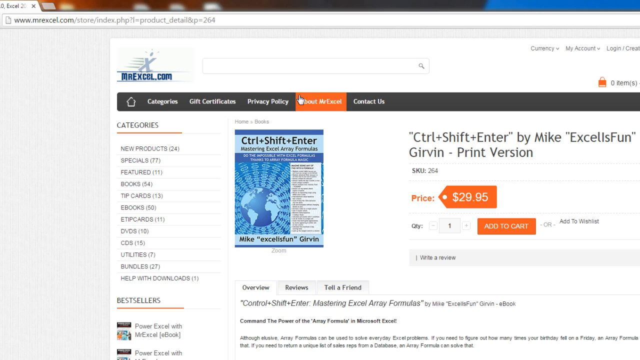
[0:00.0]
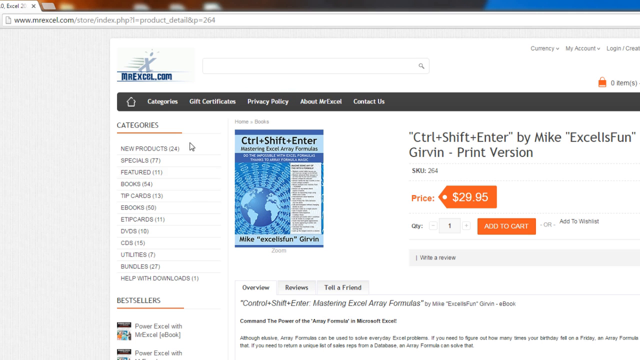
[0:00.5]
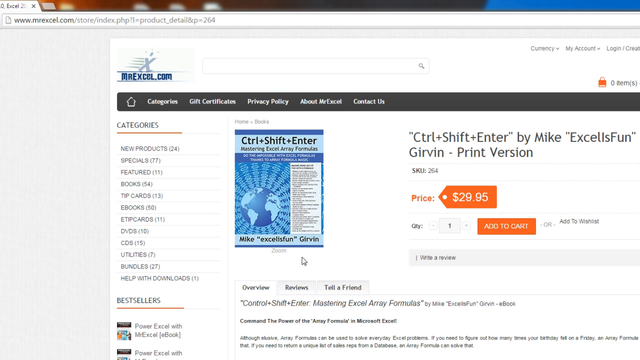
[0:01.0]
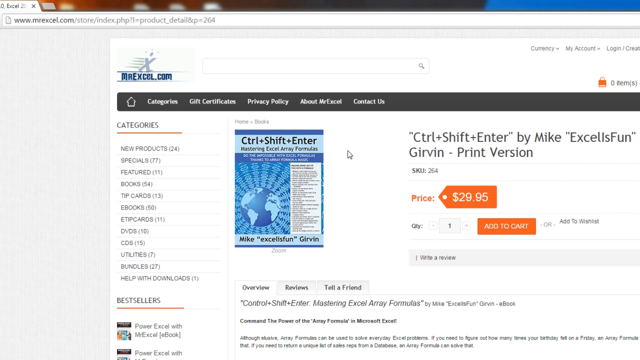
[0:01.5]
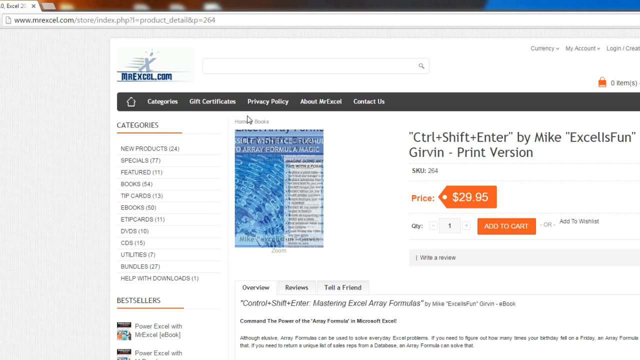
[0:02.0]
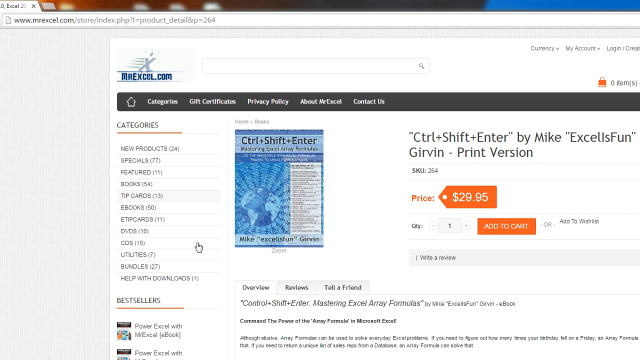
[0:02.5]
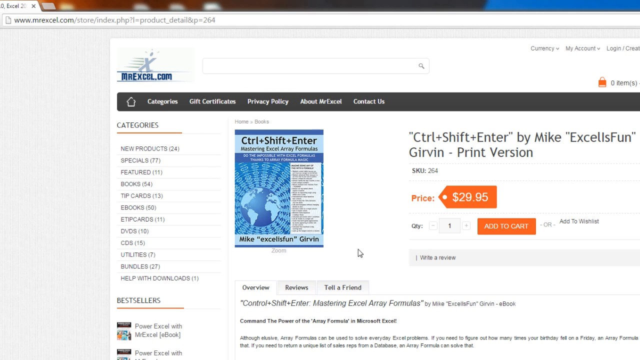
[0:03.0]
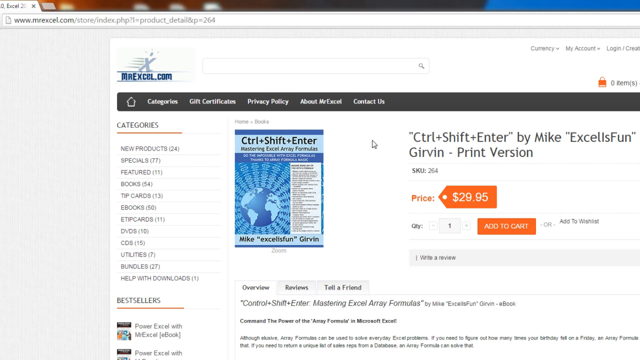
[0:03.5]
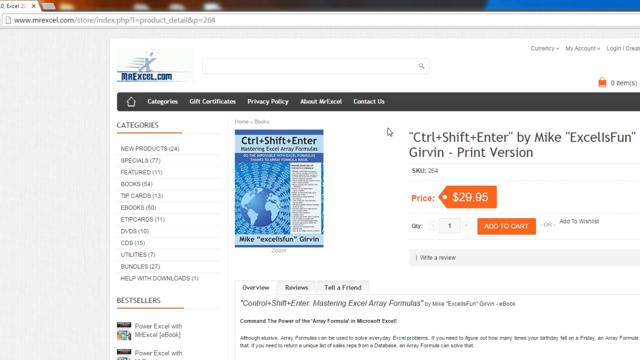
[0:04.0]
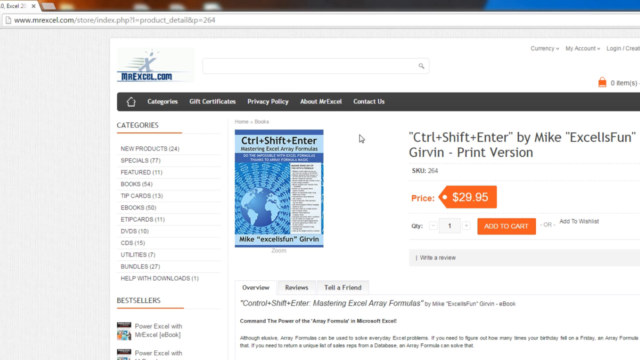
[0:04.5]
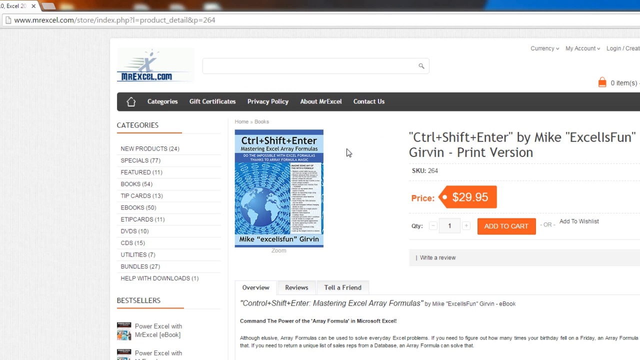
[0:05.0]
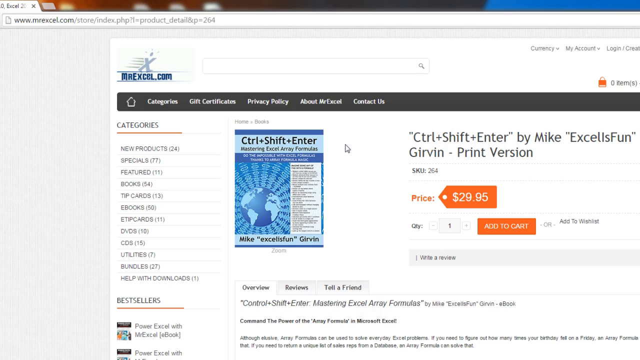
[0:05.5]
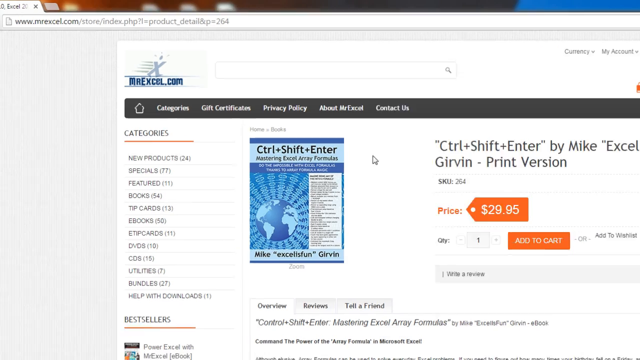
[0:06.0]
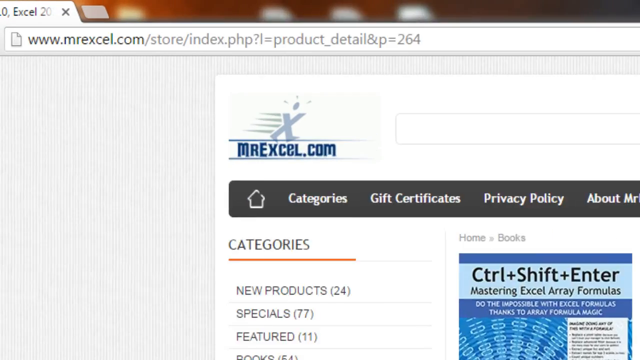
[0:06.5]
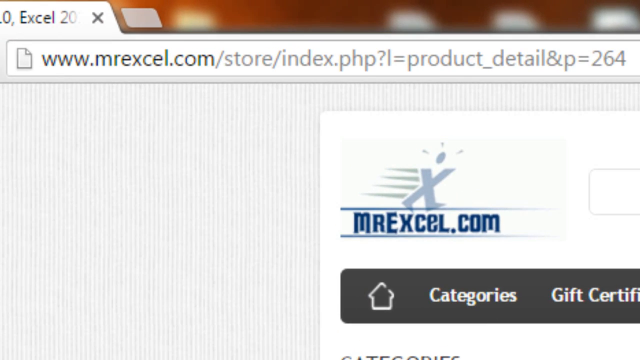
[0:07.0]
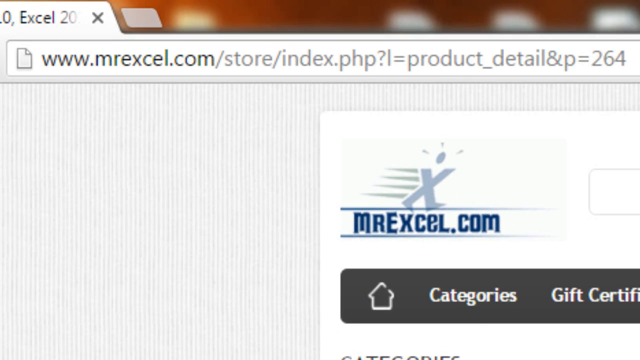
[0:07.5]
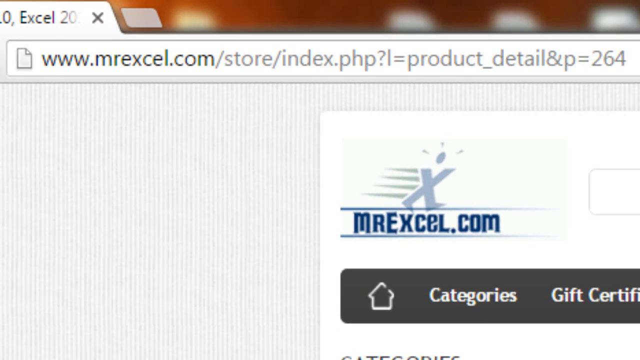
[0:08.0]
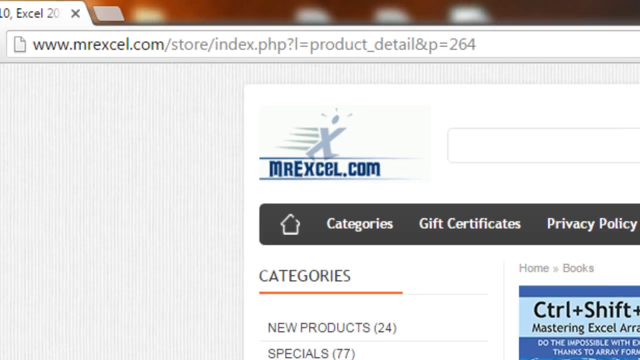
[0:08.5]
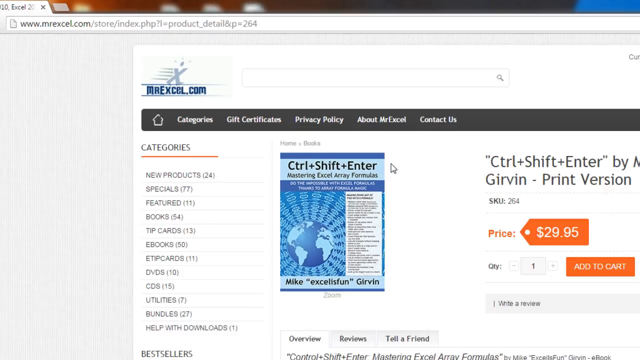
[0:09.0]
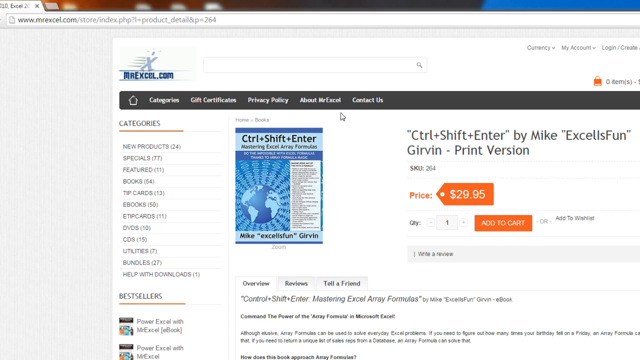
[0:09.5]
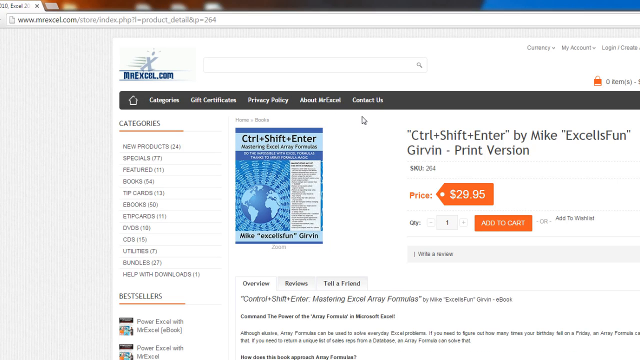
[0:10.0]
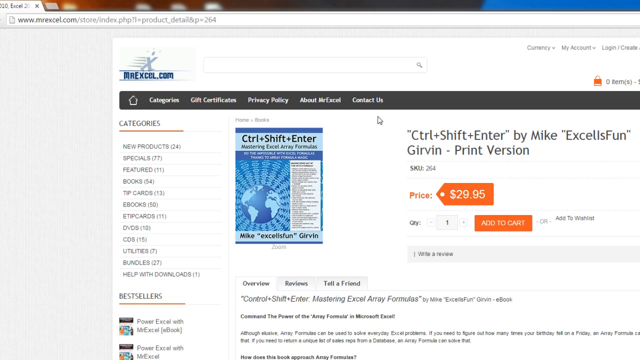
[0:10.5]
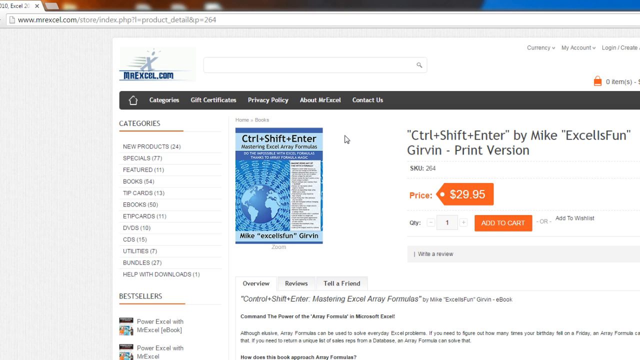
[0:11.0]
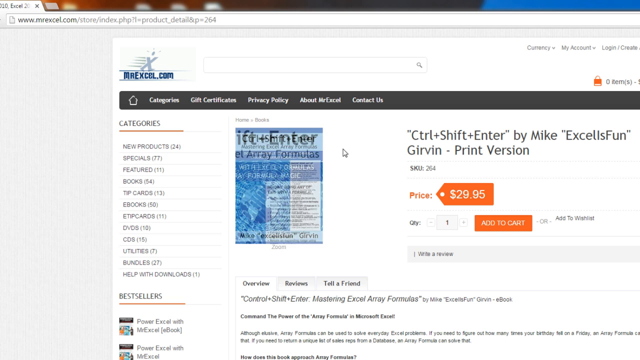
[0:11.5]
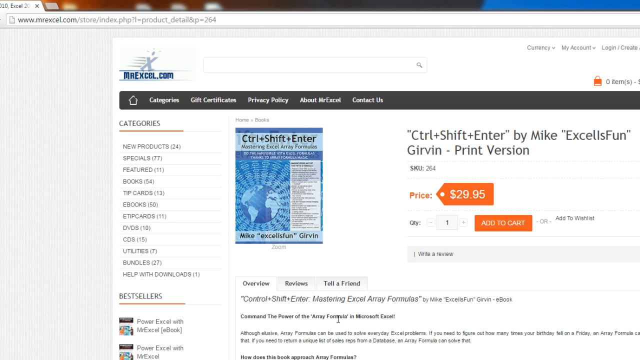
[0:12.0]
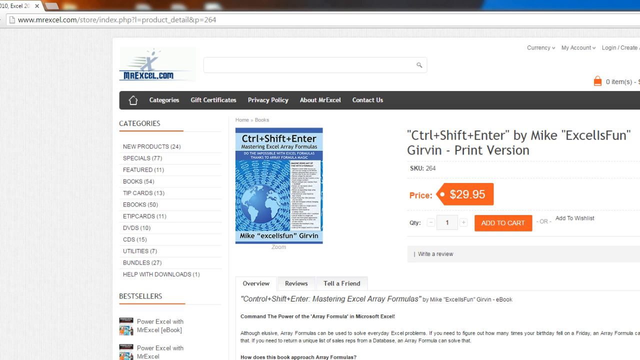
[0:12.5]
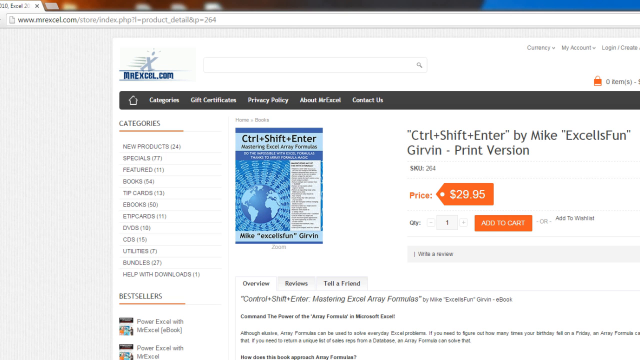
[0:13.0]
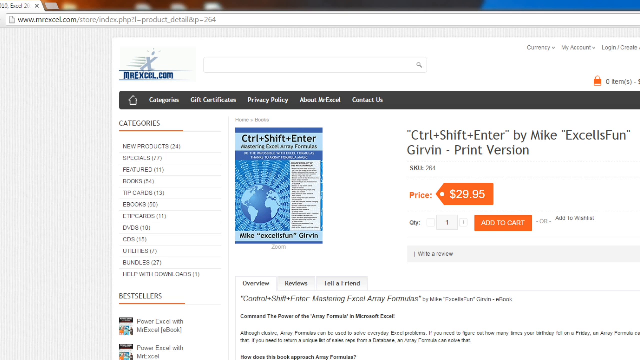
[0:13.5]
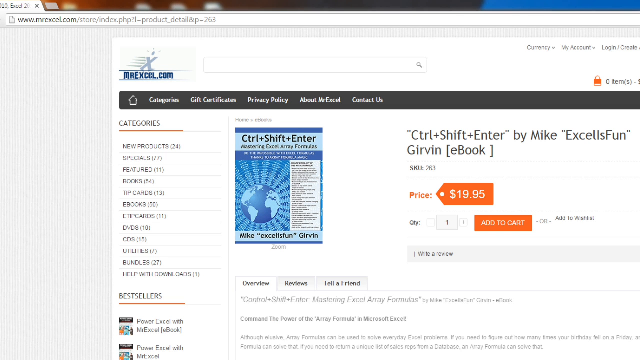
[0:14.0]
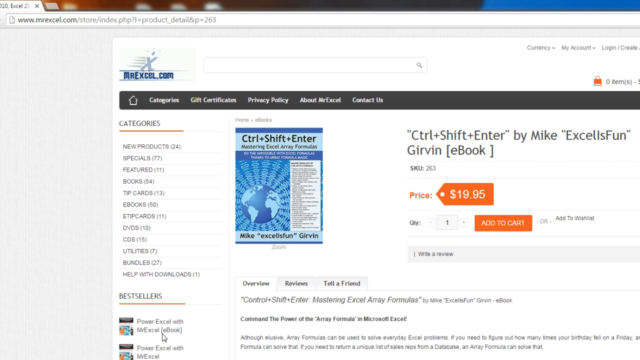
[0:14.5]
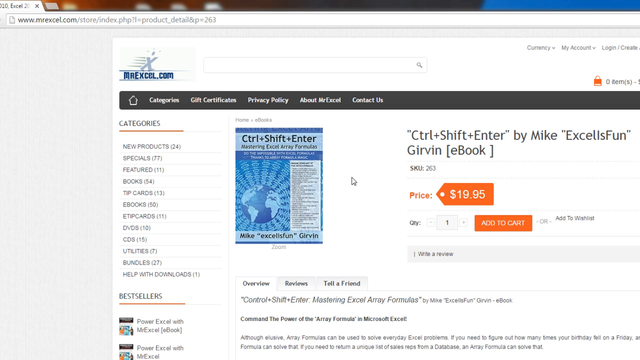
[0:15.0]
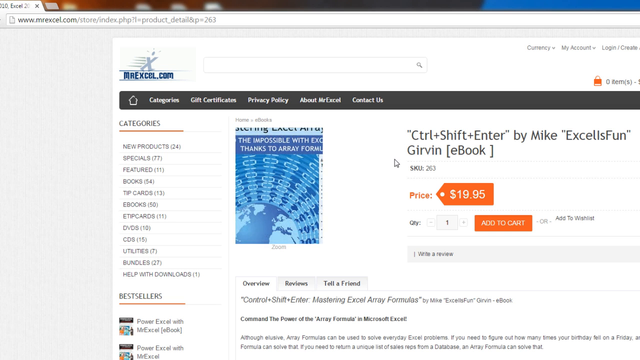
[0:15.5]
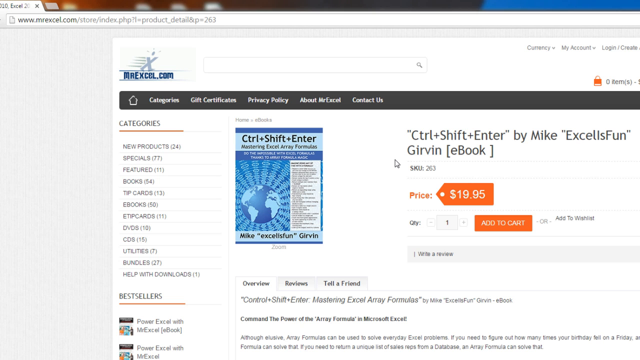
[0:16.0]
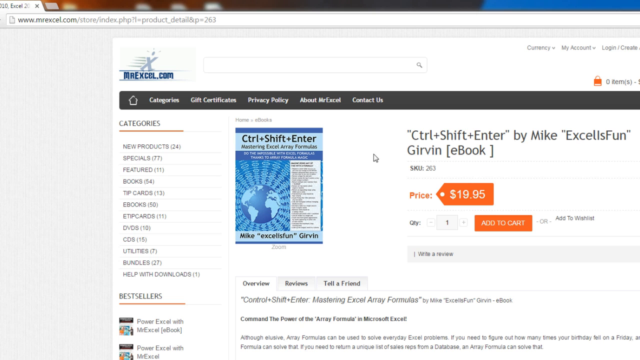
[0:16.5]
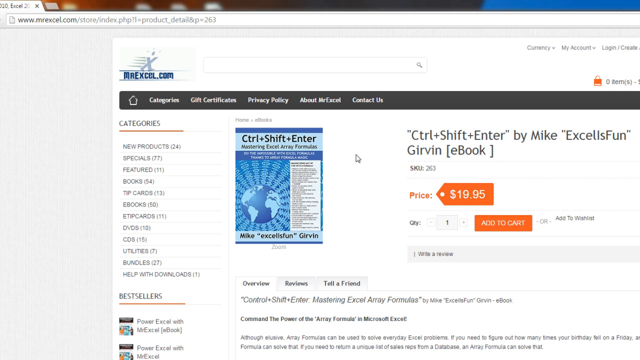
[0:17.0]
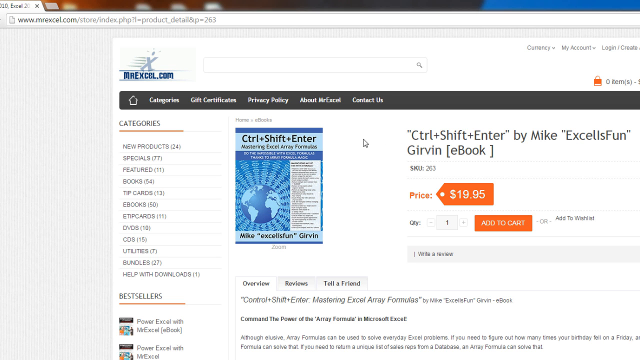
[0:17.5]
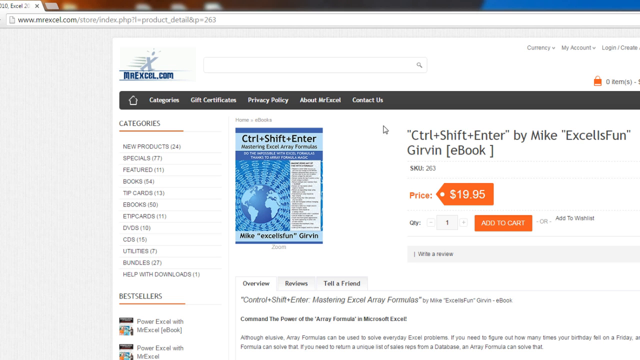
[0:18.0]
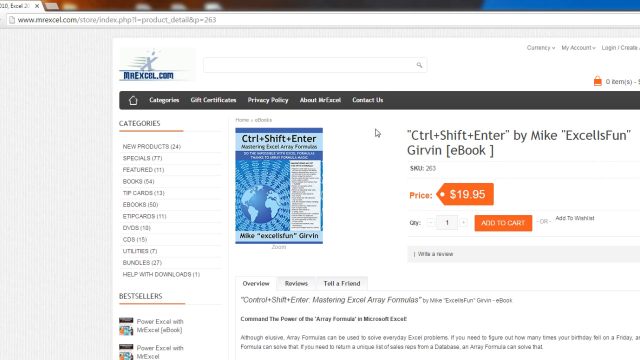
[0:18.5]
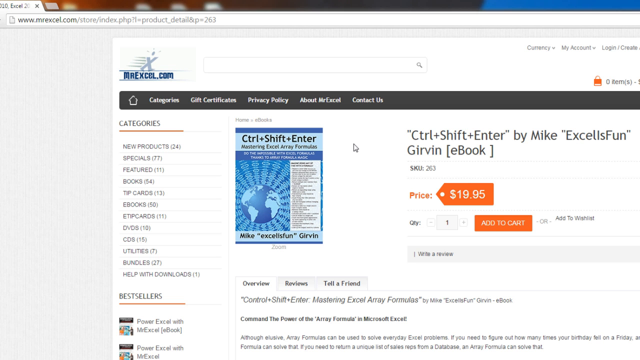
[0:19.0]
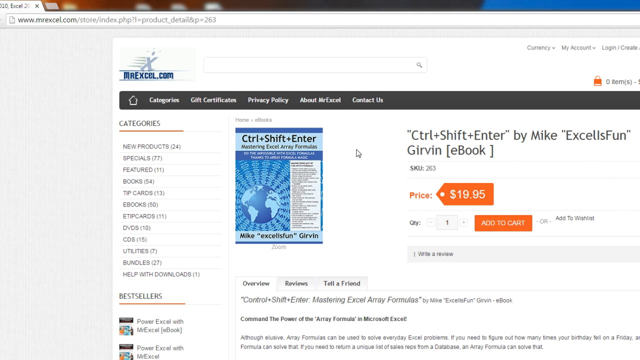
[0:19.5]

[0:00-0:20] Someone is recording their desktop computer screen, with a web browser open to a web page called MrExcel.com. They are looking at a product listing for the Control plus Shift plus Enter by Mike Excel's fun Gervin print version, listed at $29.95. The user circles the mouse cursor around the cover pictured on the listing multiple times. The cover is blue, with the book's title and author on the bottom and a graphic of Earth. The view then zooms in on the URL at the very top of the page, which is www.mrexcel.com/.store/.index.php?I=product_detail and P=264. It zooms out and looks back at the product listing. The user moves the mouse cursor rapidly left and right in a small, tiny shaking motion to the right of the pictured cover.